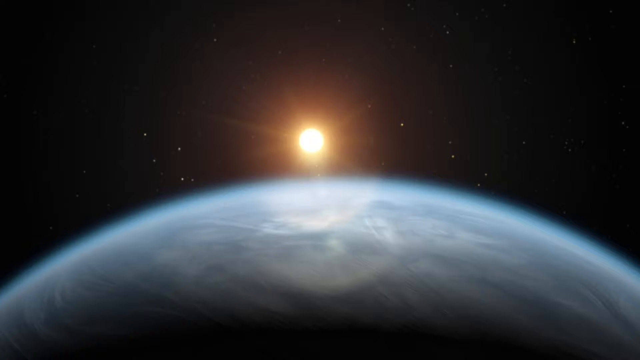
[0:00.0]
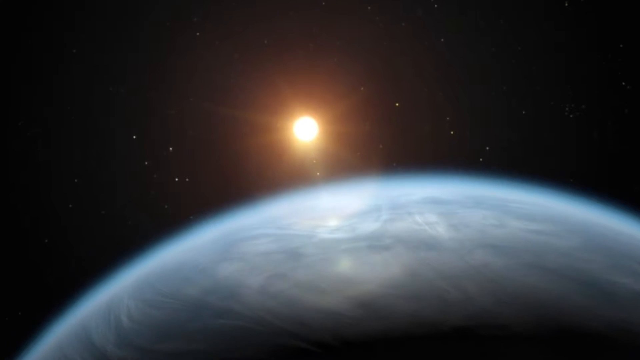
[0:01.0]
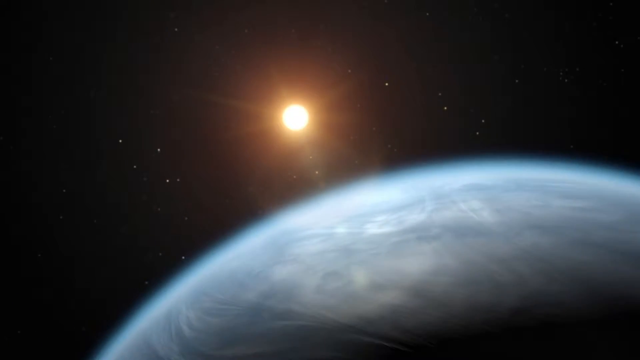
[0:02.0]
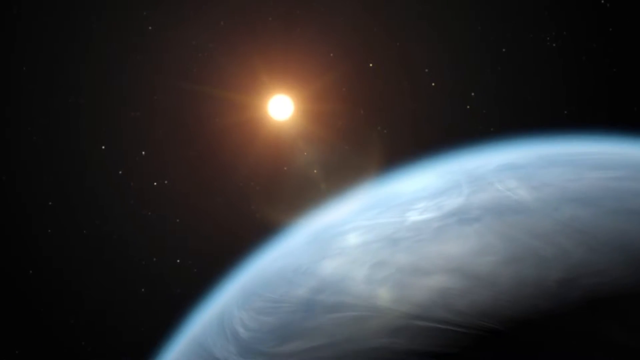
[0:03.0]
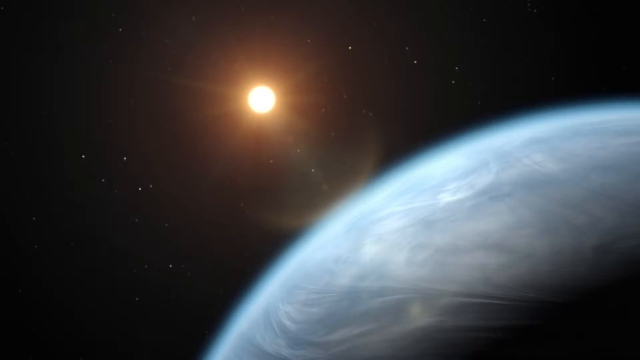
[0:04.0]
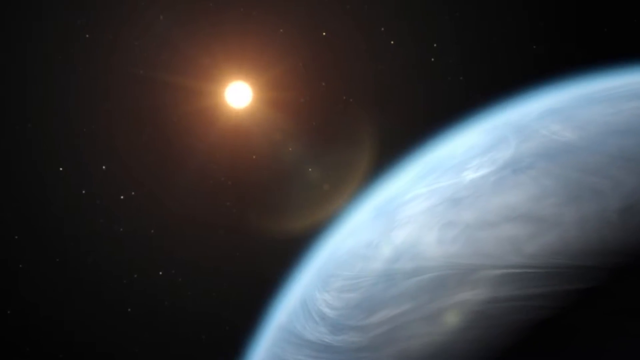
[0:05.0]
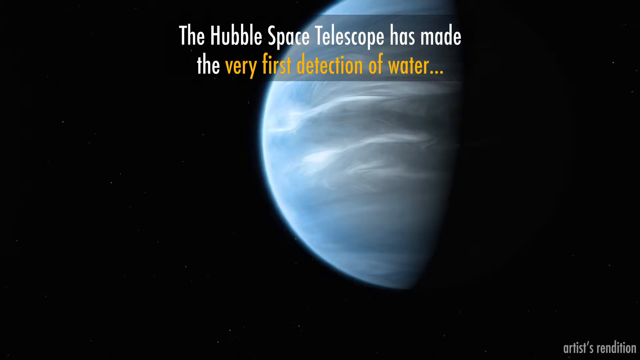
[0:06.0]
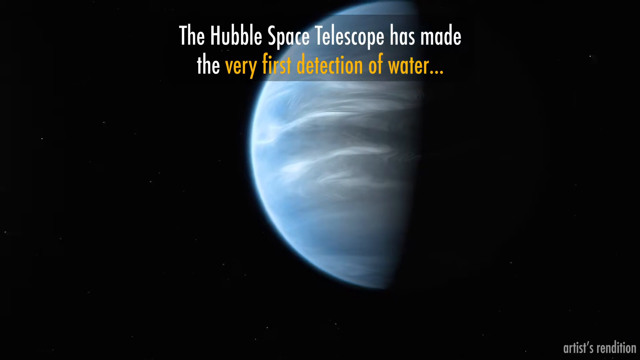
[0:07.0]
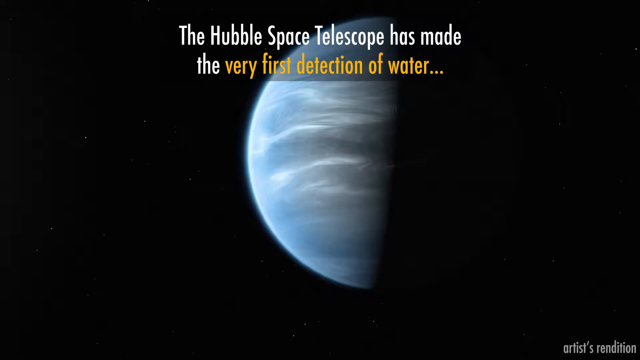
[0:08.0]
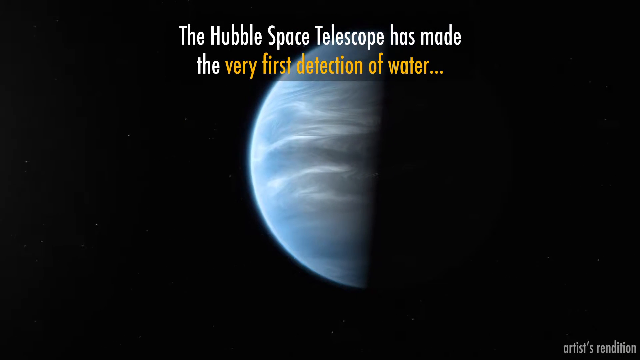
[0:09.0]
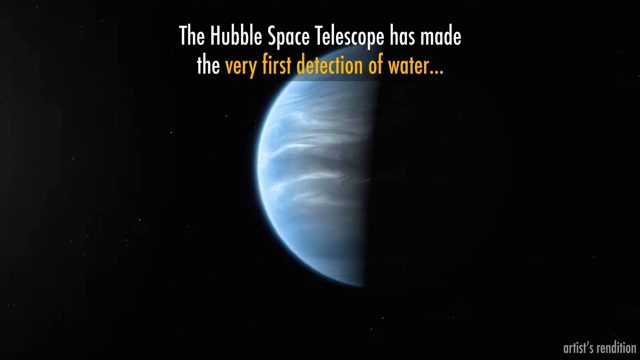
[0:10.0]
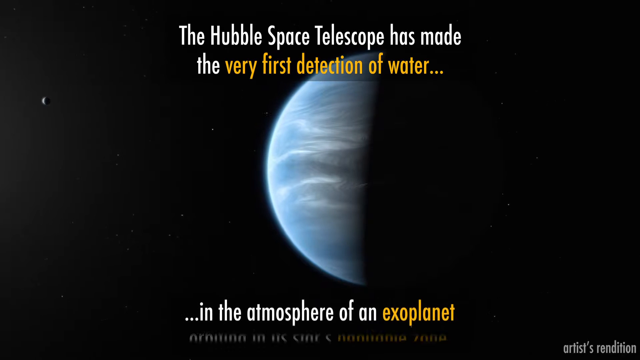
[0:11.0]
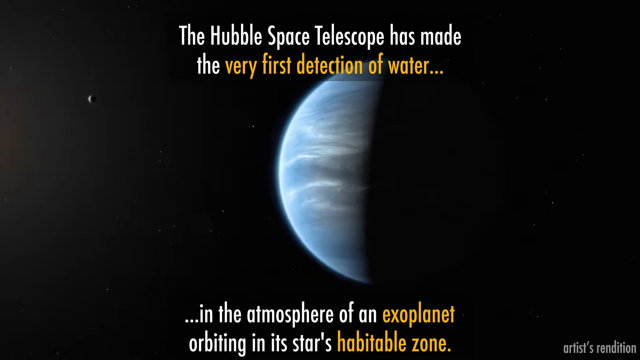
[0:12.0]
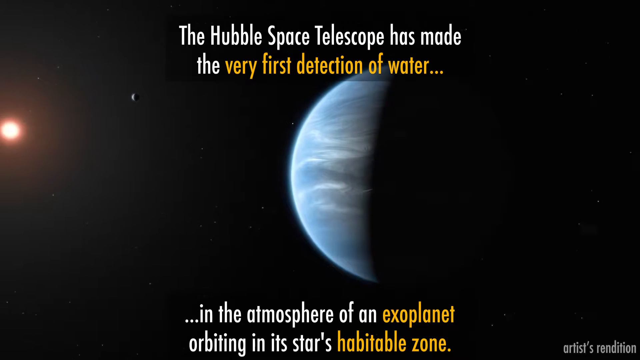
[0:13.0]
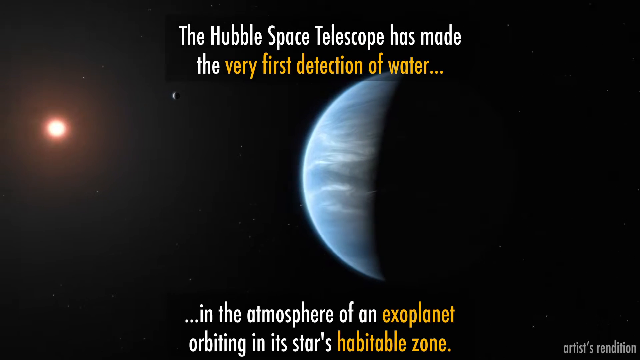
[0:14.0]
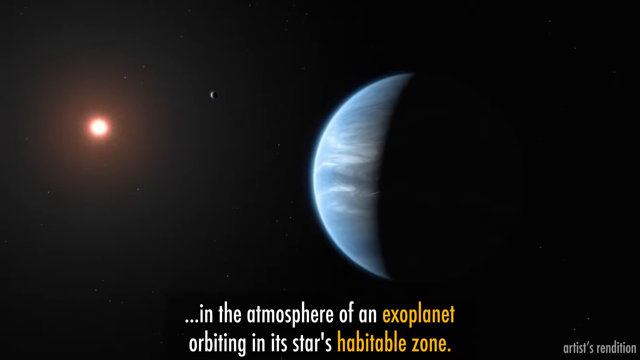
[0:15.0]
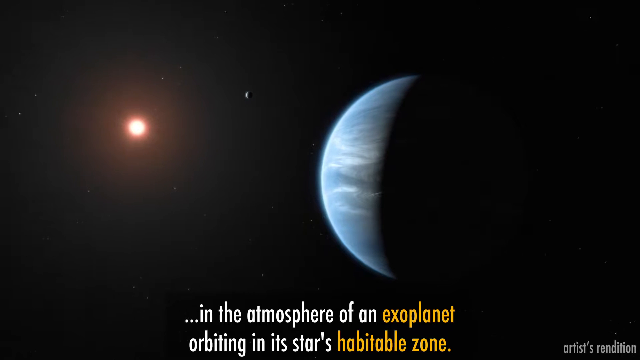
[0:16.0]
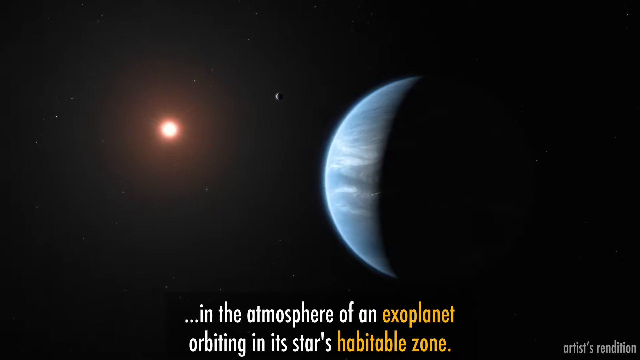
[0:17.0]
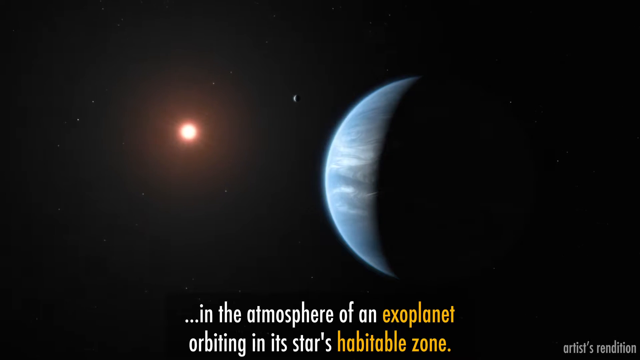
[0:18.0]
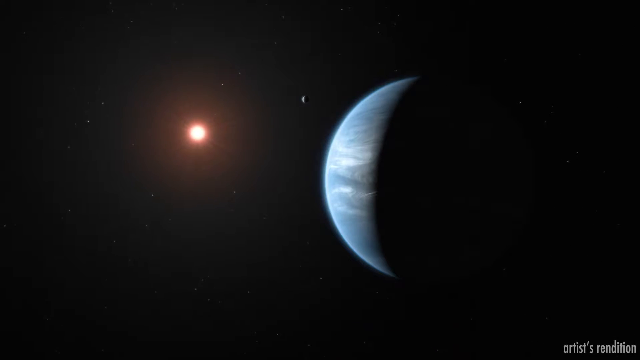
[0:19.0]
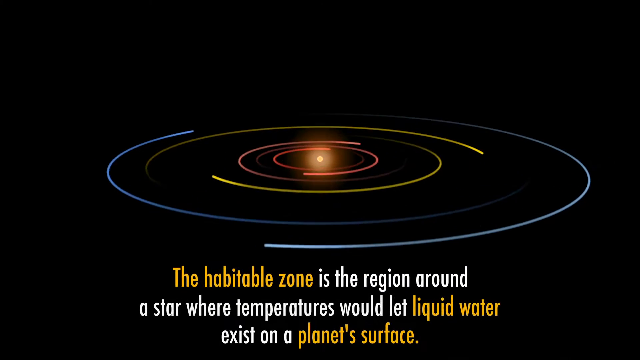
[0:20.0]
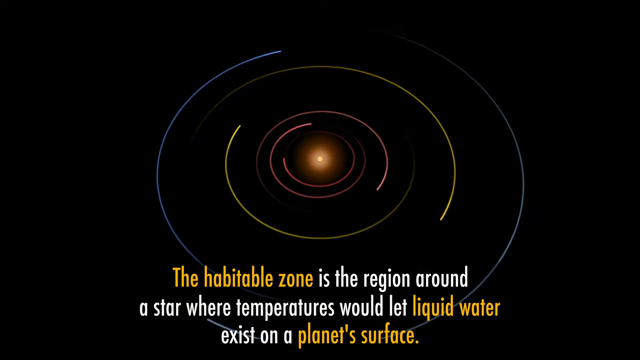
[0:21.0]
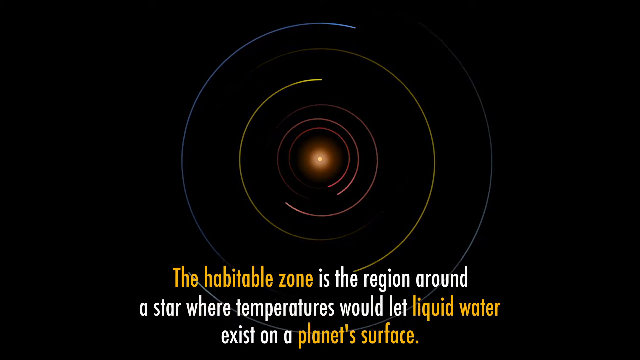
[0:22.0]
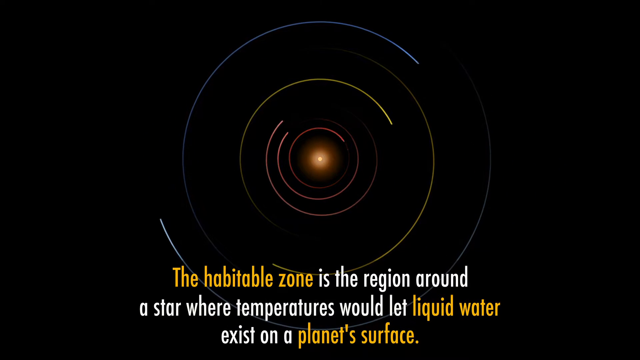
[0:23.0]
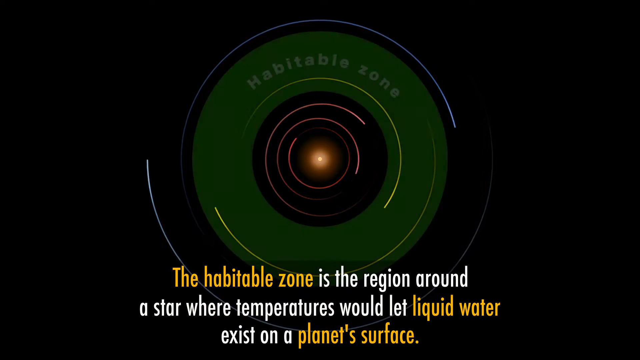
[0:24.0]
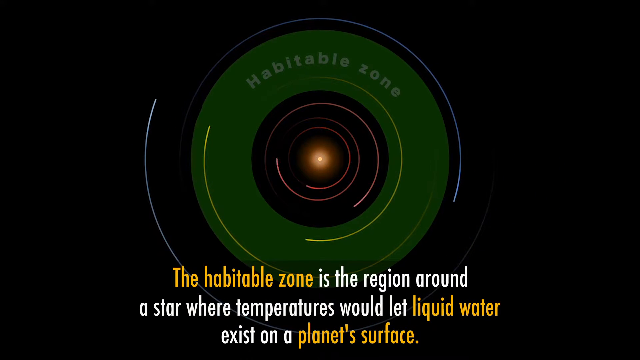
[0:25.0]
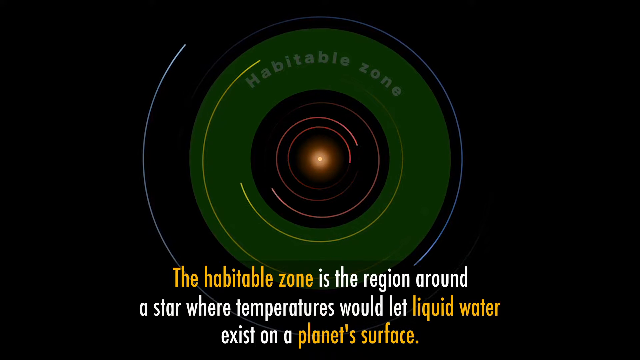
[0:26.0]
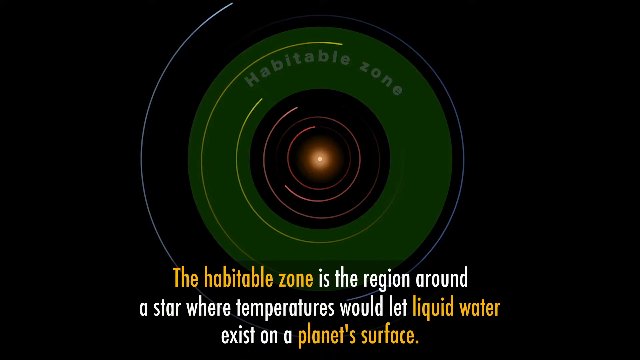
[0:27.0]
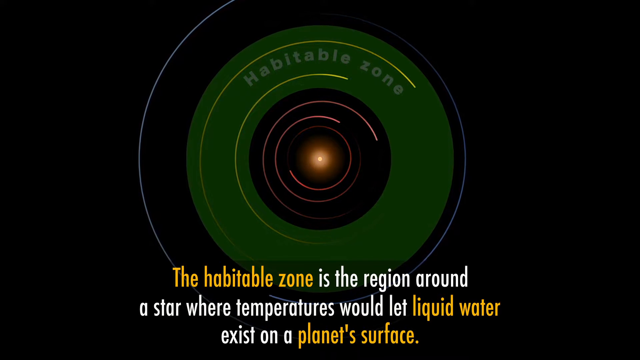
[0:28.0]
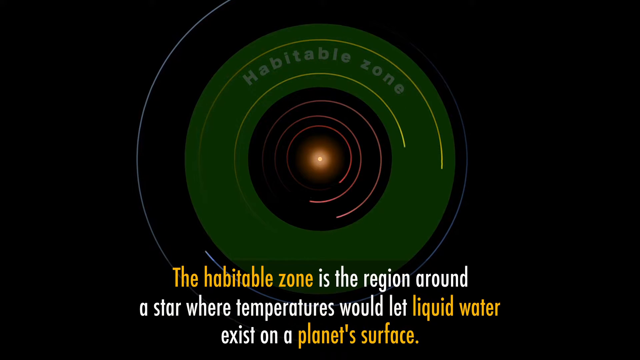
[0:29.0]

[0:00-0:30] A black sky is filled with stars. In the background there is a sun or a very close star, and in the foreground there is a globe that looks like a planet. Only its top is visible; it is a little blurry and bluish gray. As the video goes on, the orb turns and comes up the right side. The screen changes to a black sky with the left half of the bluish gray planet, and text at the top in a black translucent banner reads "the Hubble Space Telescope has made the very first detection of water". The camera angle moves out, and still only about half of the globe is visible. Text at the bottom says "in the atmosphere of an exoplanet orbiting in its star's habitable". The angle turns, and the close star or sun enters the frame from the left, continuing until the star is closer to the globe. The screen then changes to a black background with the star or sun at the very center. Three red lines are swirled around it, outside of those are two yellow lines swirled around it, and then two blue lines. Text at the bottom says "the habitable zone is the region around a star where temperatures would let liquid water exist on a planet's surface." The view goes from an angled view to an overhead view. A green circle then appears surrounding the area where the yellow swirls were, and in it, in white, it says "habitable zone".